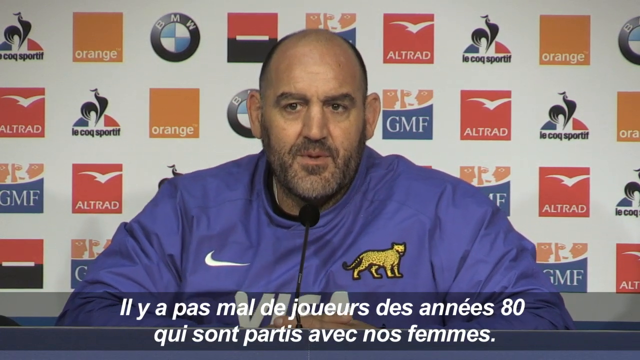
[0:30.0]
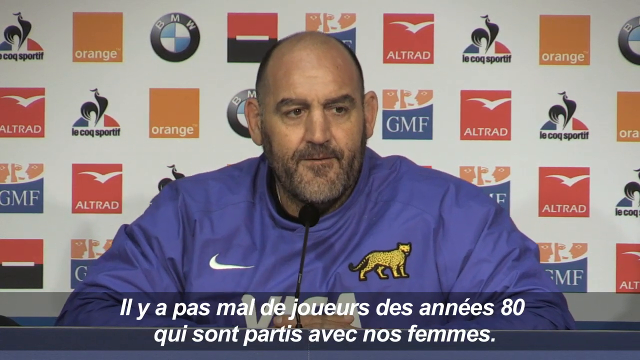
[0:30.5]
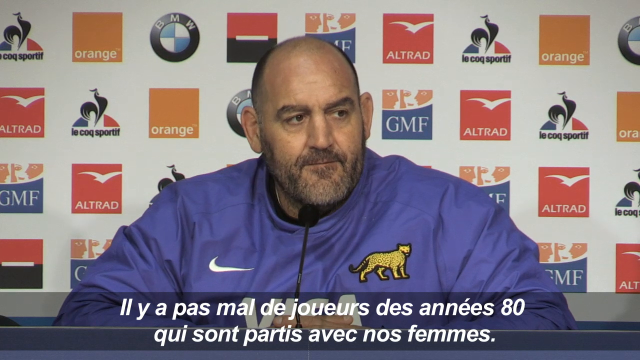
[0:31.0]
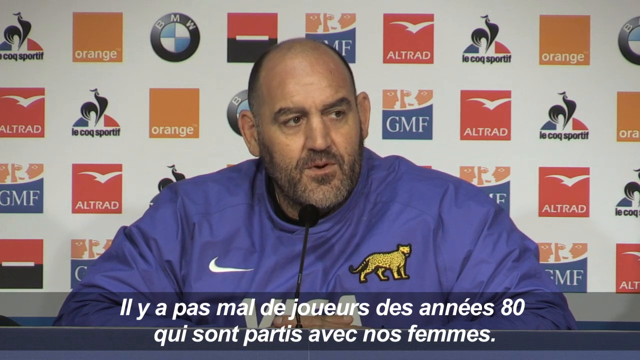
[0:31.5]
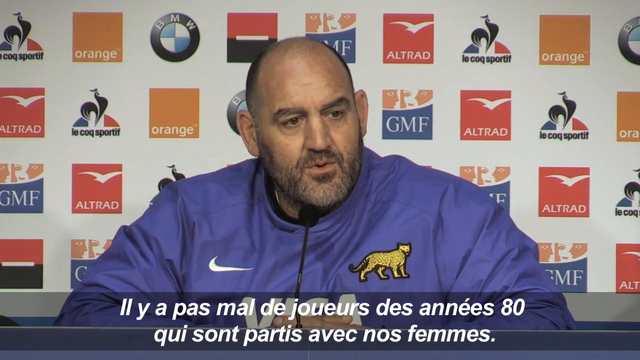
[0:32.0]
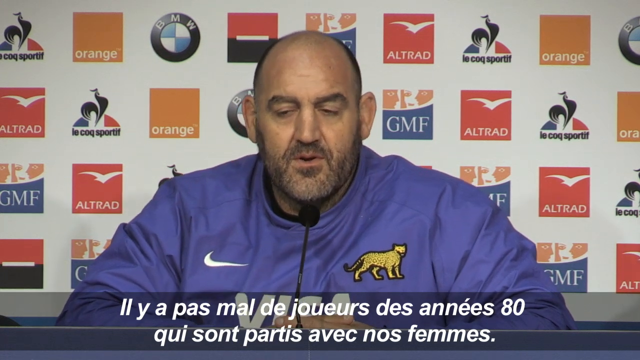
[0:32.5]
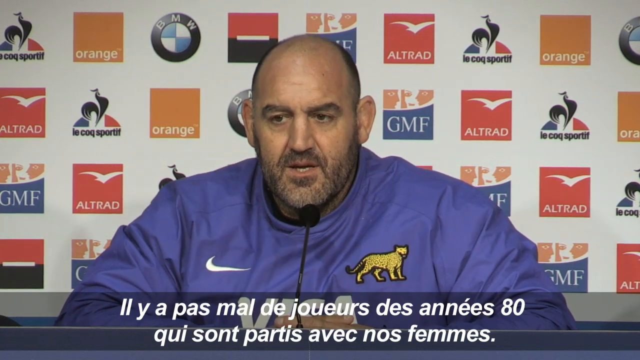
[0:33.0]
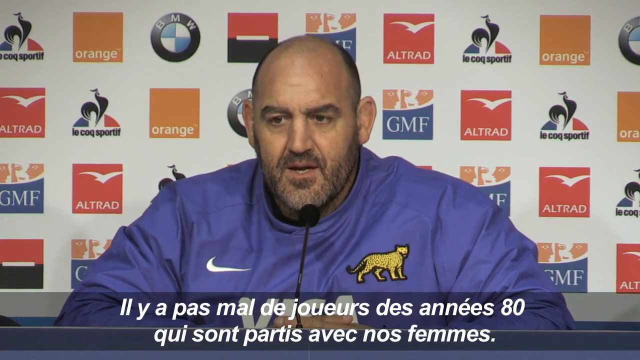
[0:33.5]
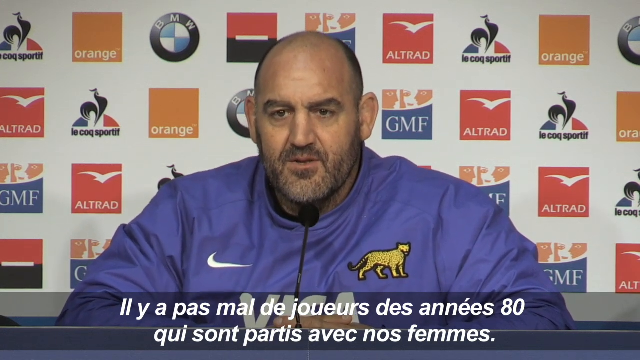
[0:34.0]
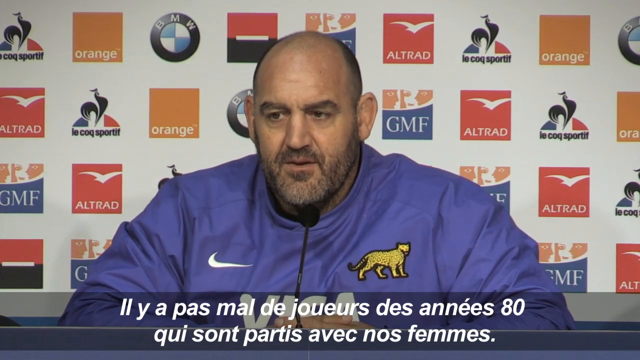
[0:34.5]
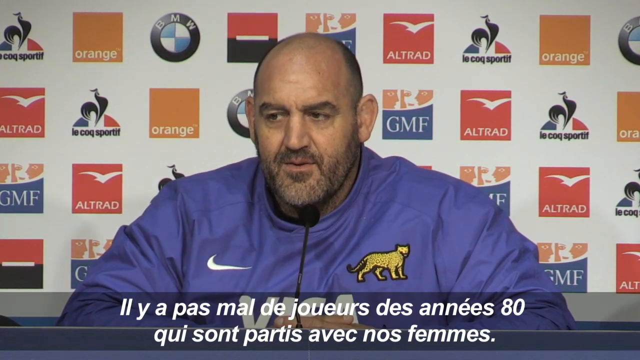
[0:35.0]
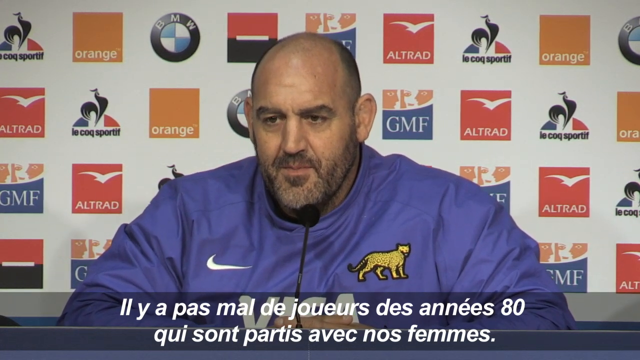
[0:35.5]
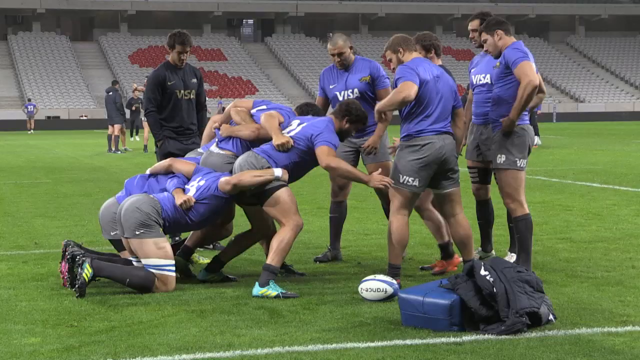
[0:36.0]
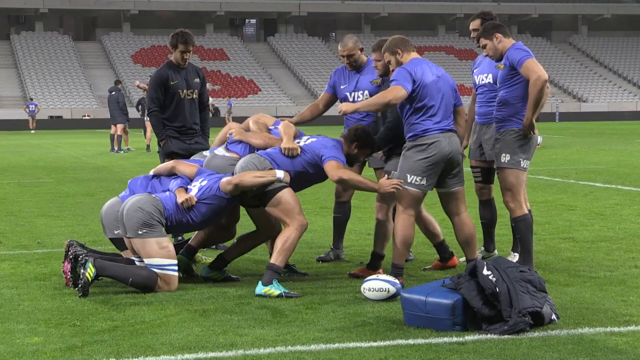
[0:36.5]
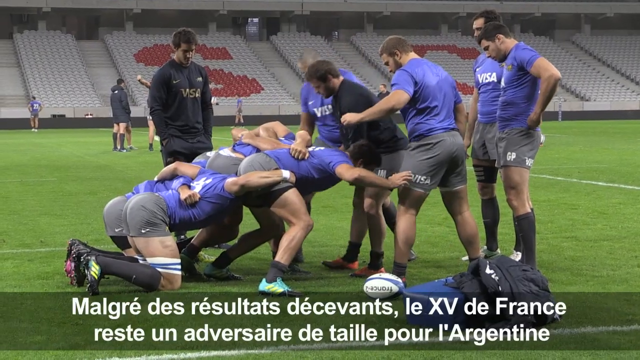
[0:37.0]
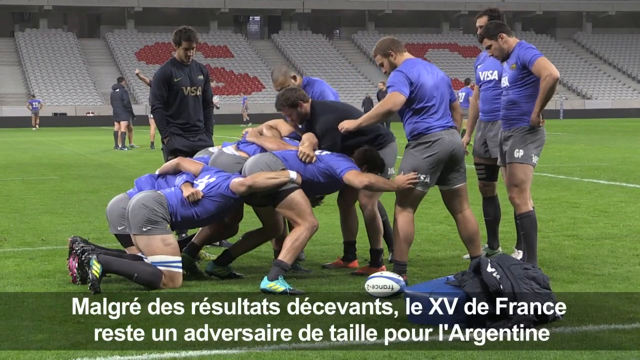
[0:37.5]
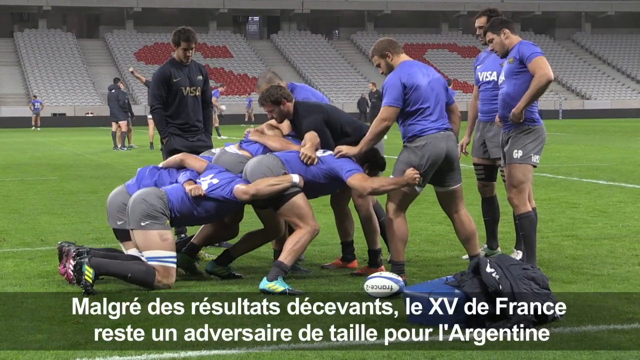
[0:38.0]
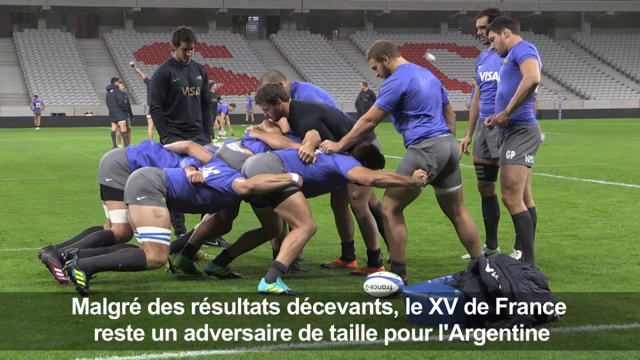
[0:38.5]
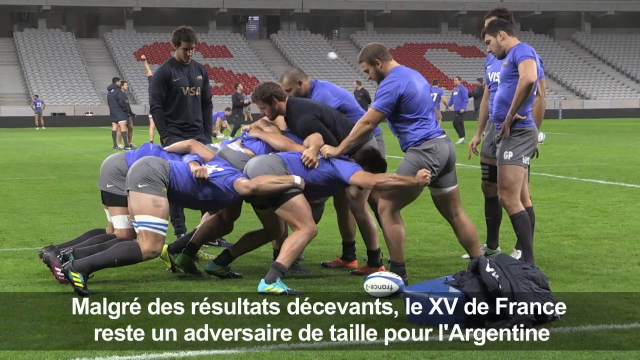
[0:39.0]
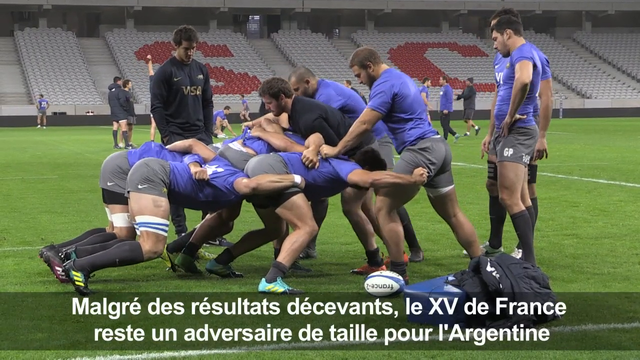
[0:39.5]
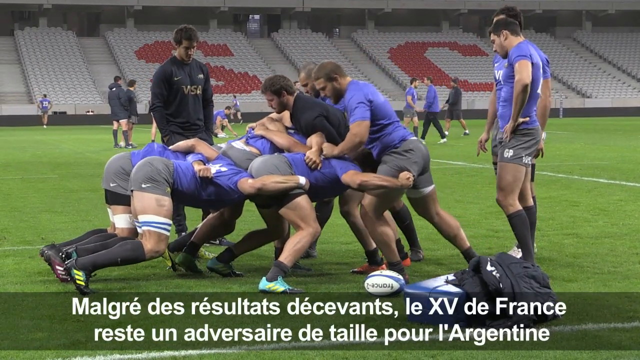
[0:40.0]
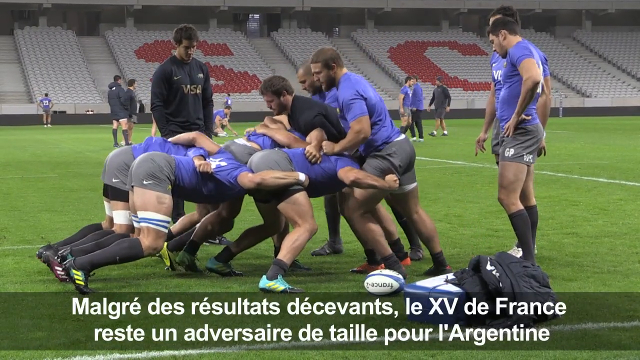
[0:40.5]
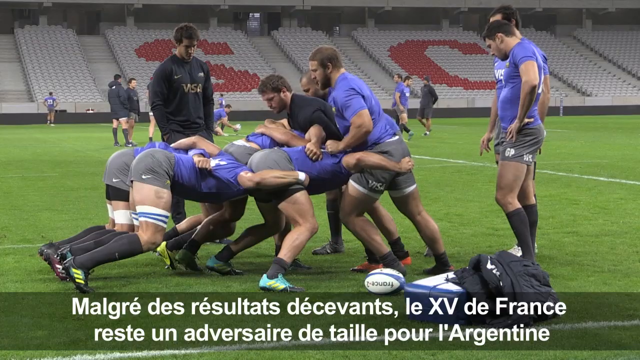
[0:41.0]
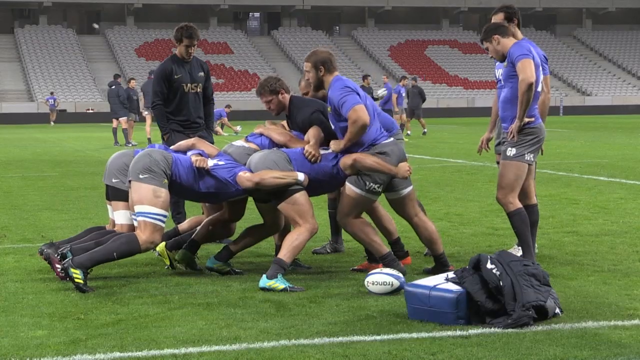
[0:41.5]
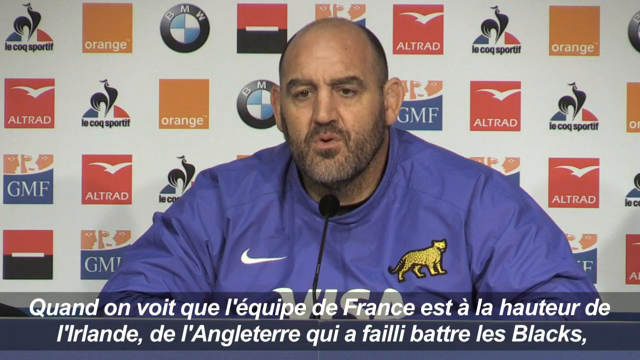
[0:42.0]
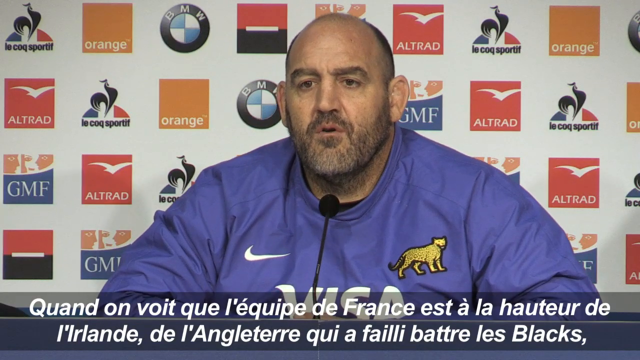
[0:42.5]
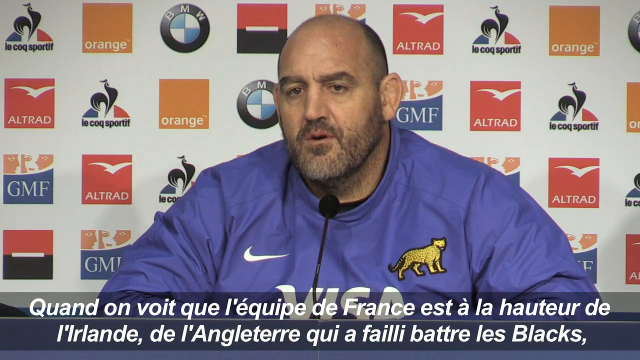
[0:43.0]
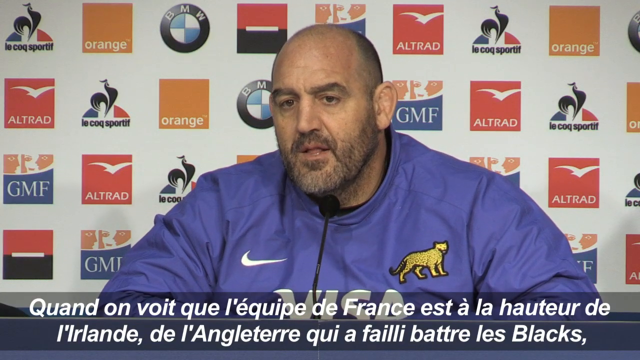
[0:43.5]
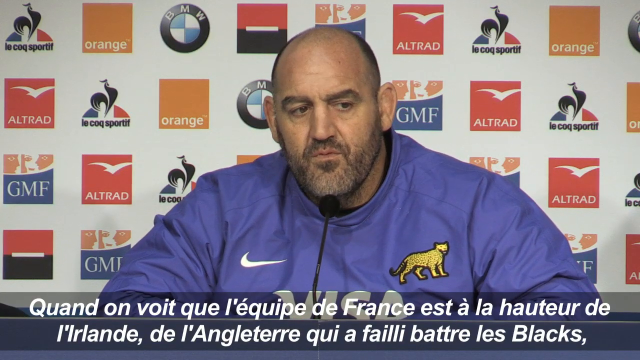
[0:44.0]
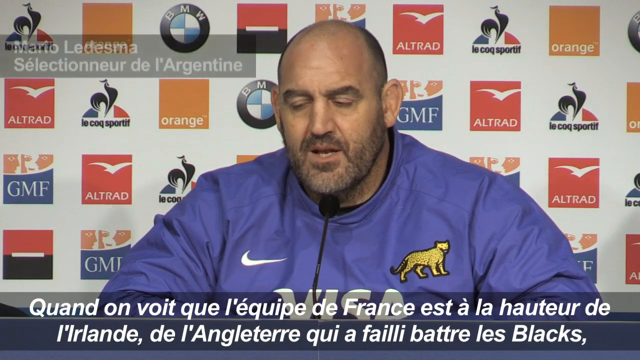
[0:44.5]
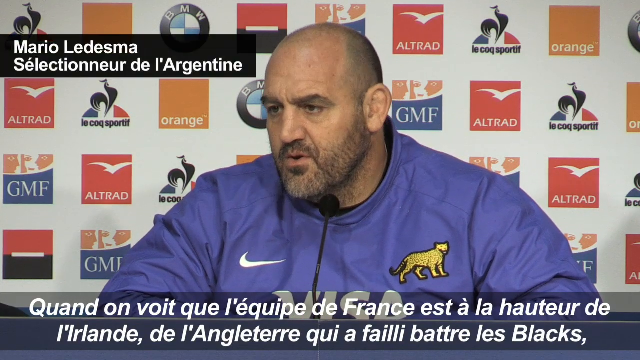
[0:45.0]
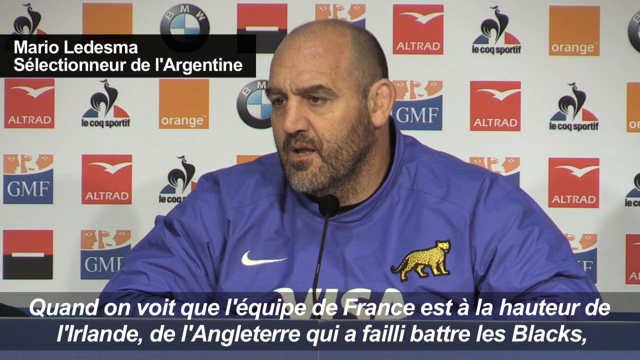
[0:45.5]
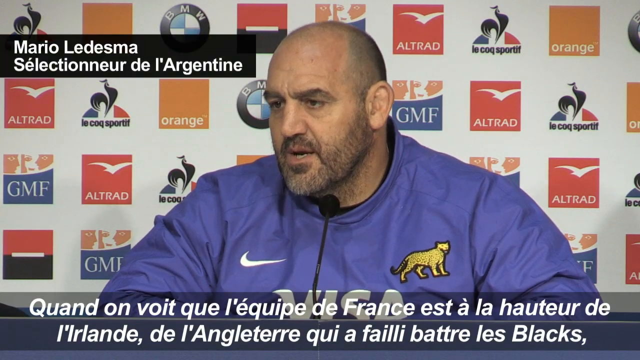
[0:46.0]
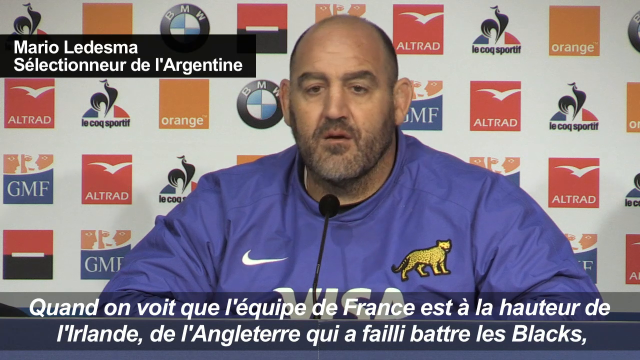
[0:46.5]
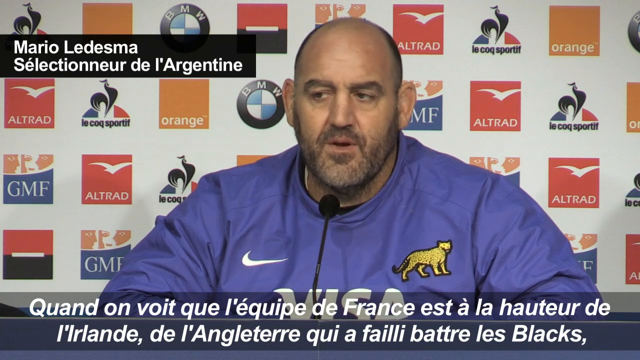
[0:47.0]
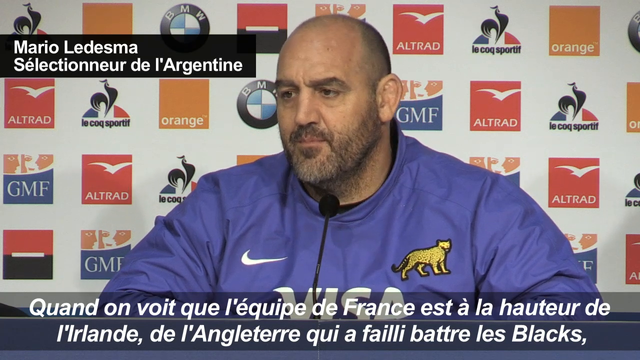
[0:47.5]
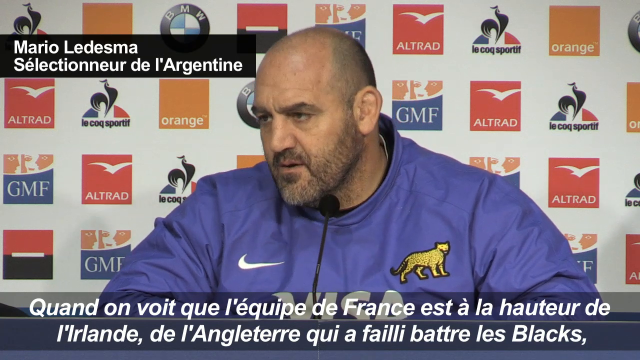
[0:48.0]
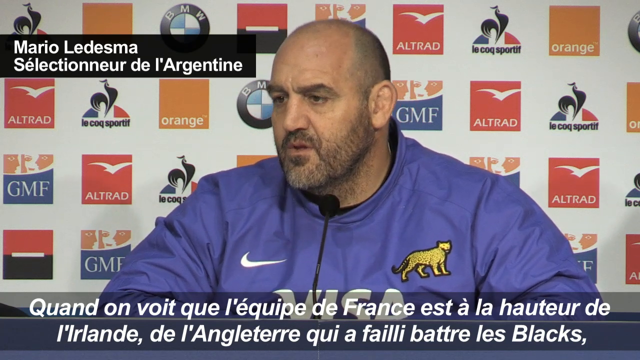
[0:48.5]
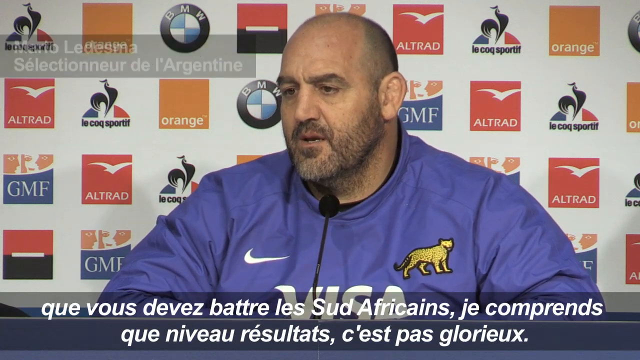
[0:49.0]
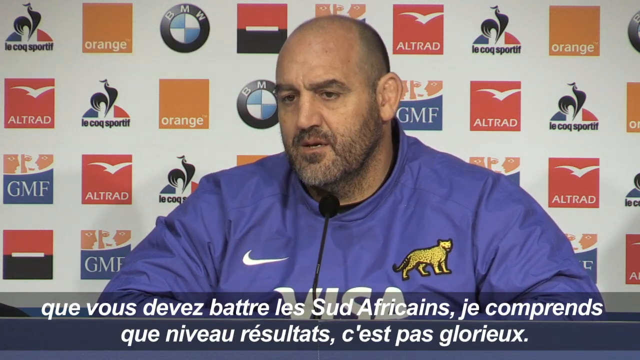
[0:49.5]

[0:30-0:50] The man in the blue windbreaker continues to speak in front of the advertising-laden billboard behind him, wearing a puma over his left breast and the Nike symbol over his right as he speaks to the assembled press. He nods his head a little as he makes a point. Players are then shown on the field getting down into a scrum, pushing each other above the ball, before the video cuts back to the coach in front of the billboard. He shakes his head side to side as he speaks, then looks to his right, to his center, and to his right again, without making eye contact.